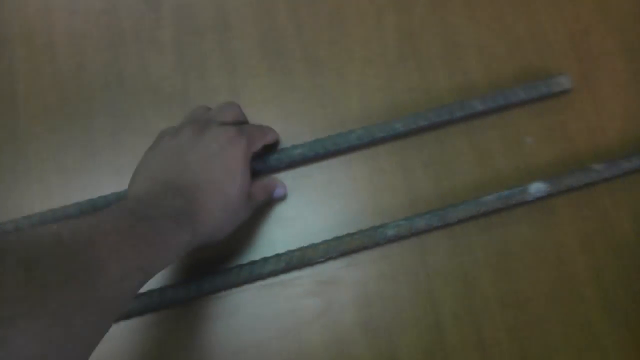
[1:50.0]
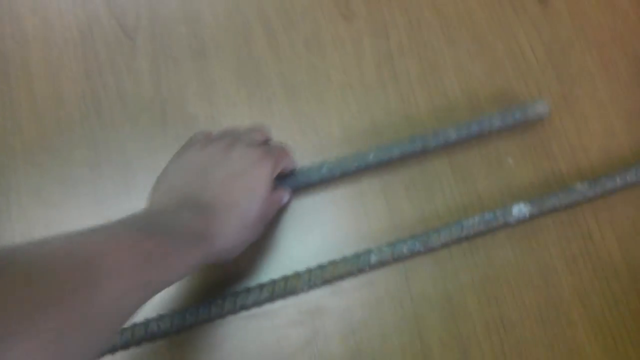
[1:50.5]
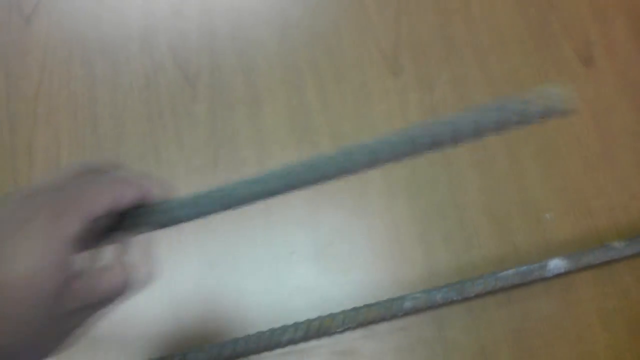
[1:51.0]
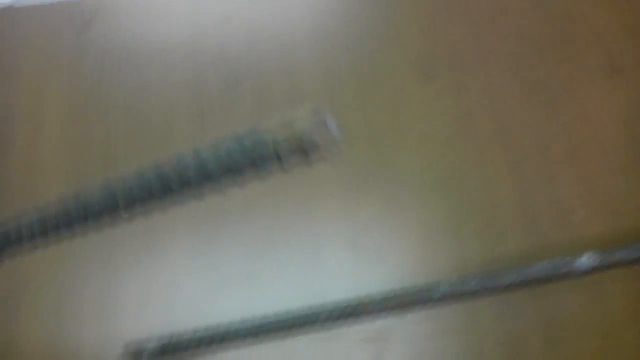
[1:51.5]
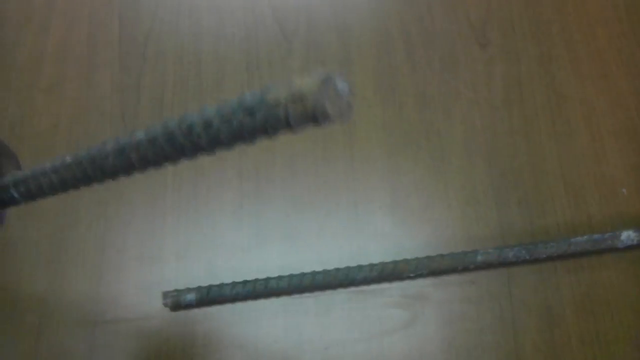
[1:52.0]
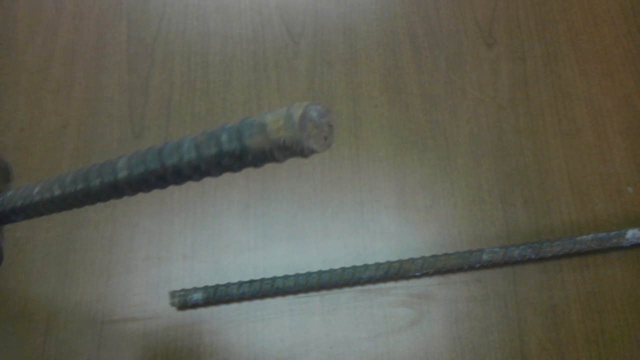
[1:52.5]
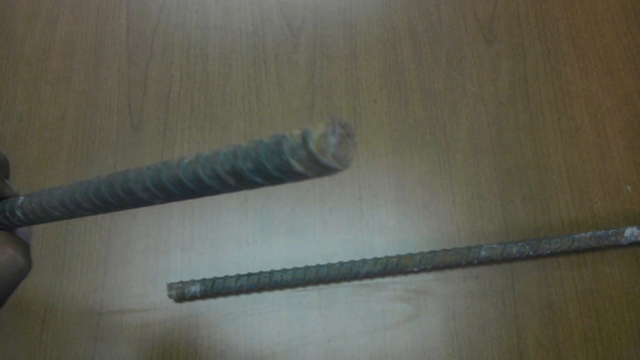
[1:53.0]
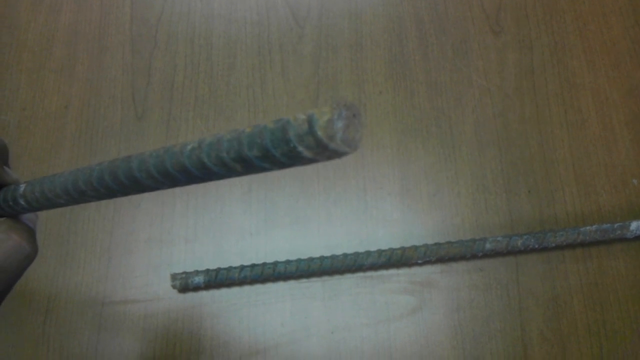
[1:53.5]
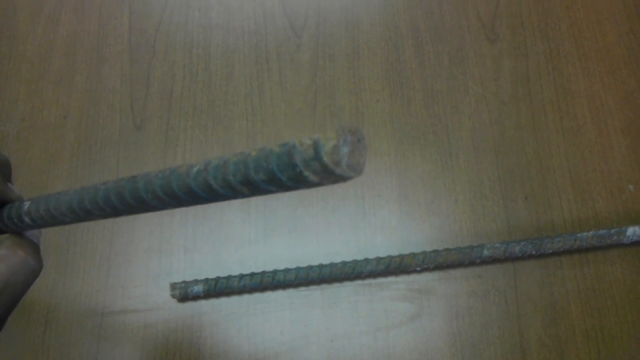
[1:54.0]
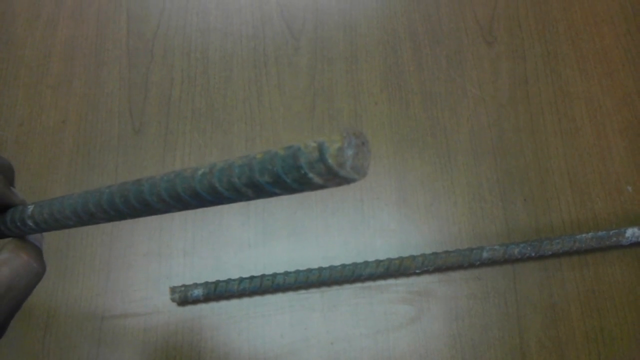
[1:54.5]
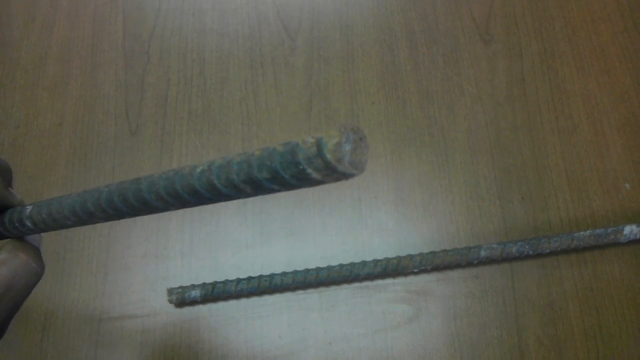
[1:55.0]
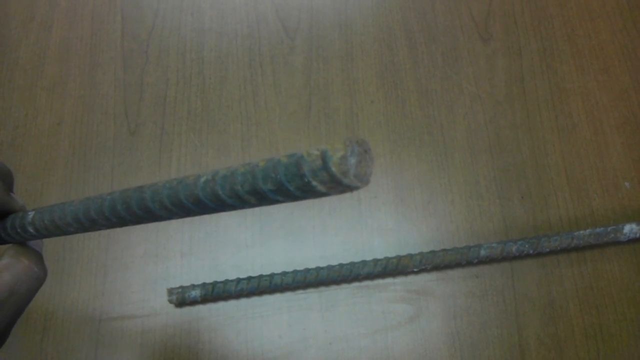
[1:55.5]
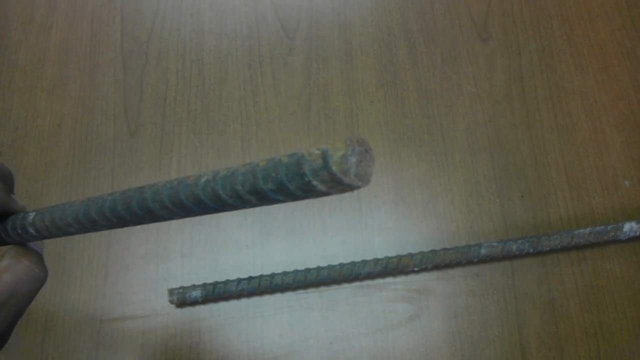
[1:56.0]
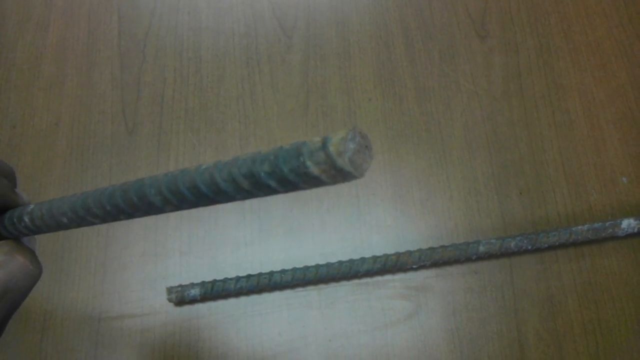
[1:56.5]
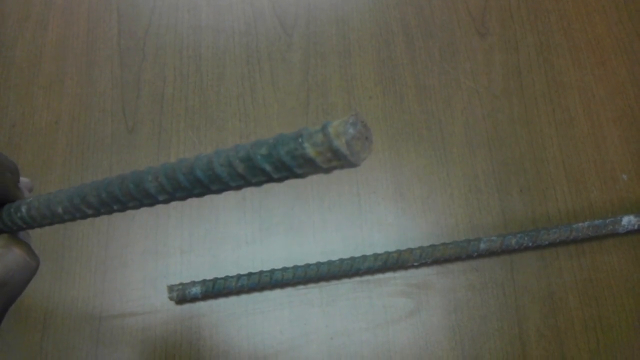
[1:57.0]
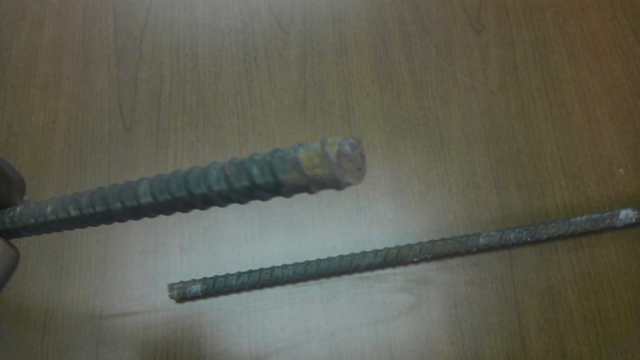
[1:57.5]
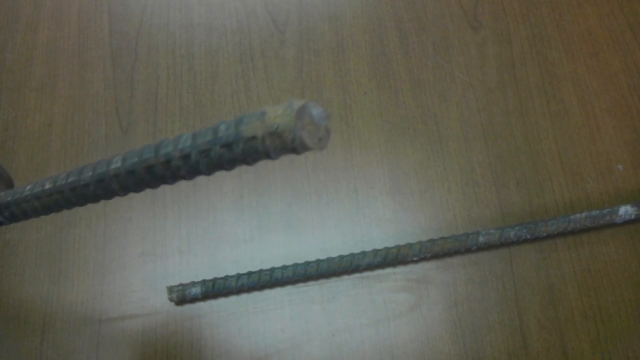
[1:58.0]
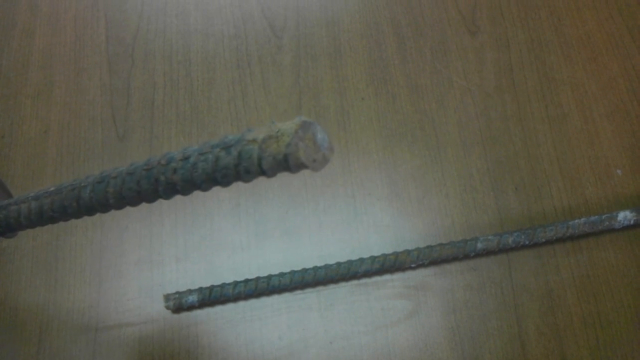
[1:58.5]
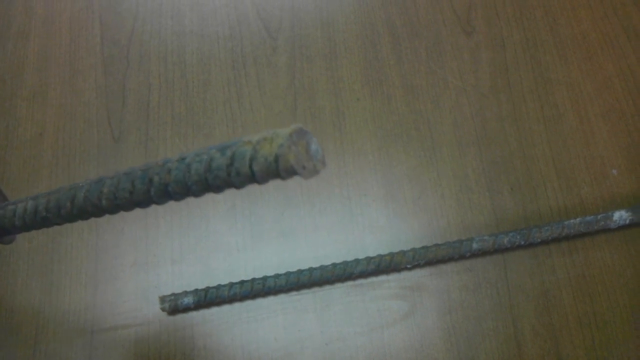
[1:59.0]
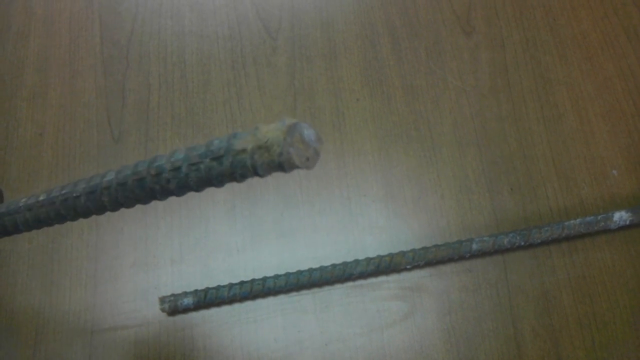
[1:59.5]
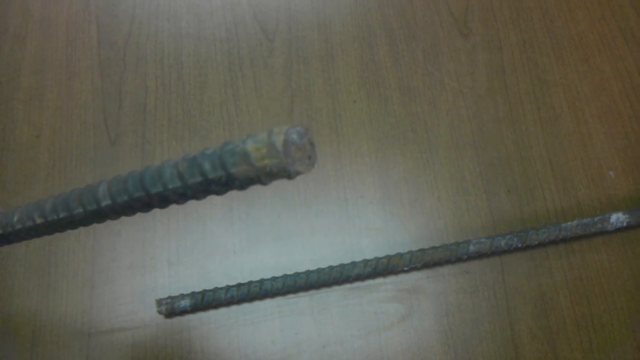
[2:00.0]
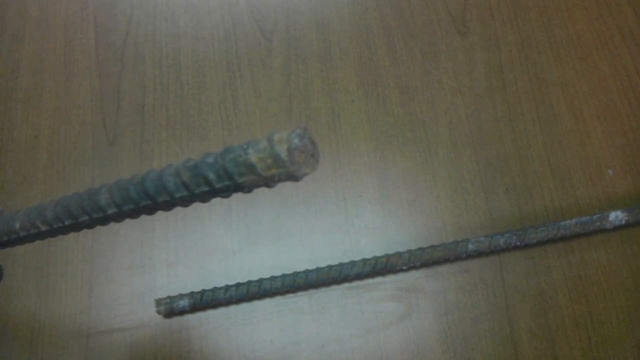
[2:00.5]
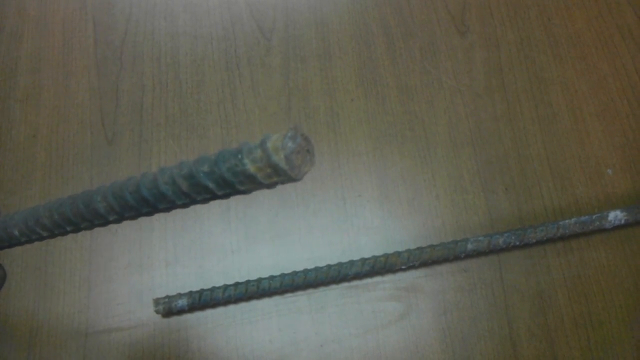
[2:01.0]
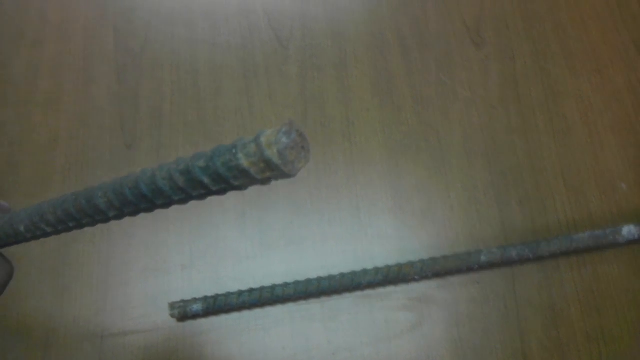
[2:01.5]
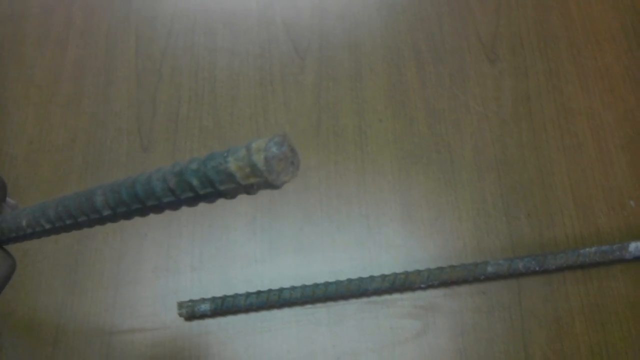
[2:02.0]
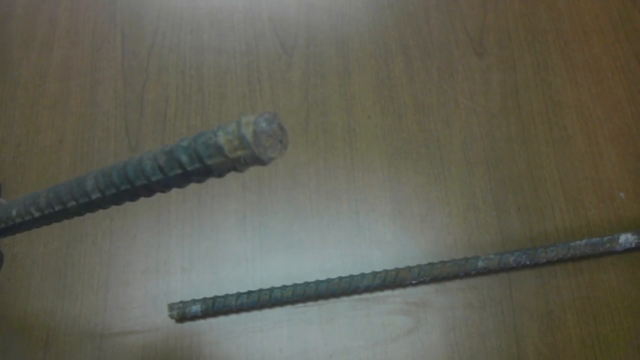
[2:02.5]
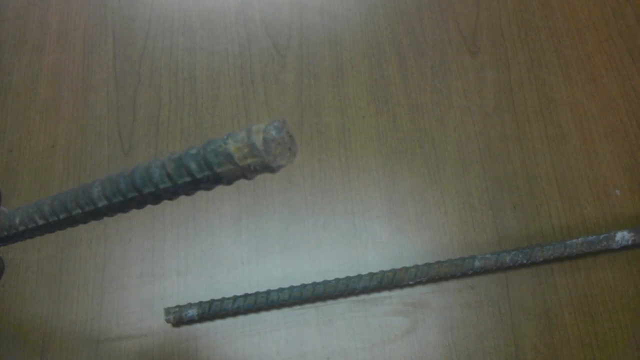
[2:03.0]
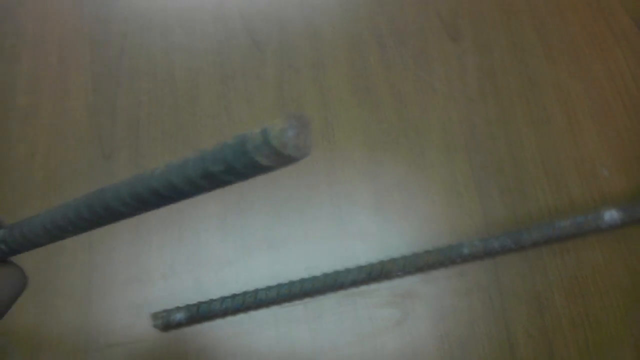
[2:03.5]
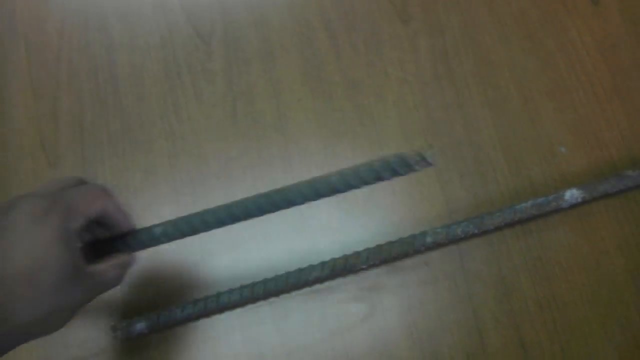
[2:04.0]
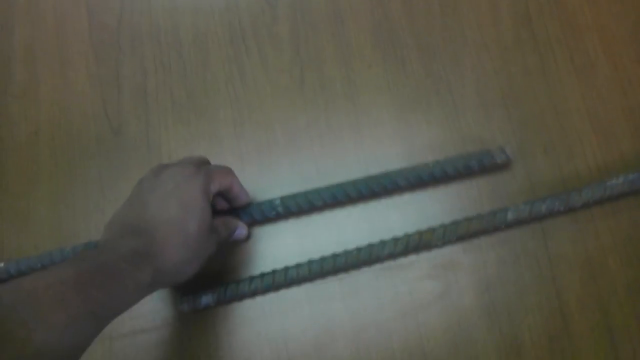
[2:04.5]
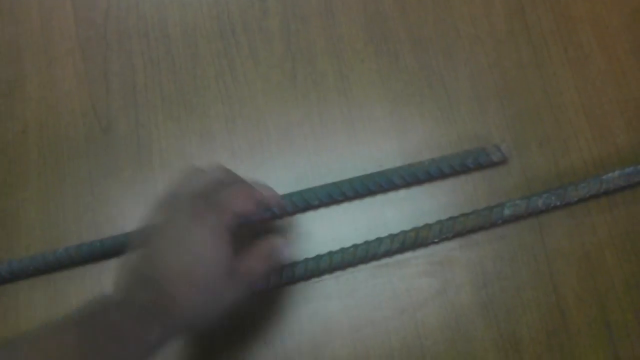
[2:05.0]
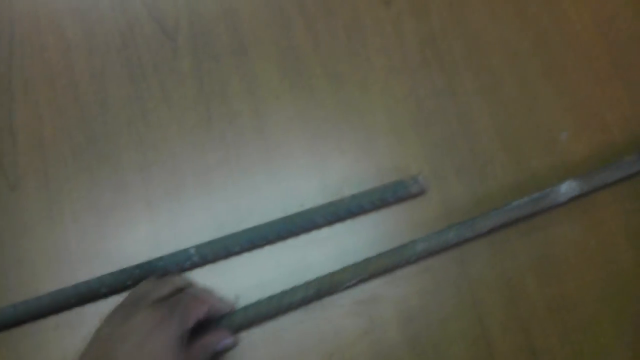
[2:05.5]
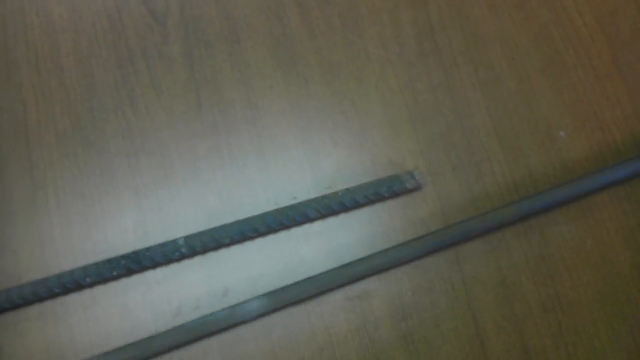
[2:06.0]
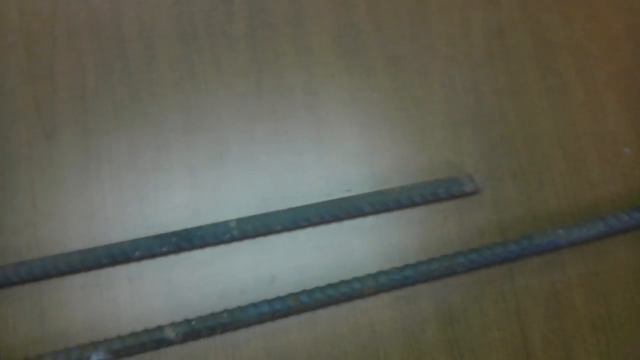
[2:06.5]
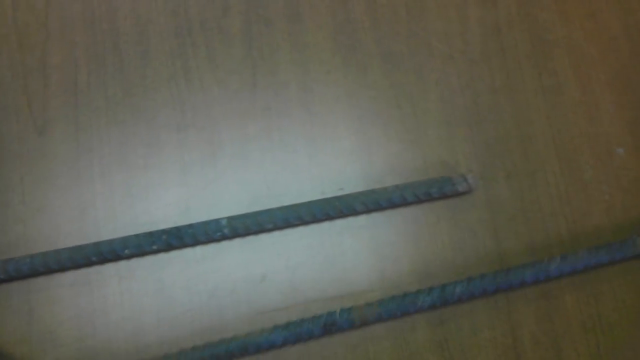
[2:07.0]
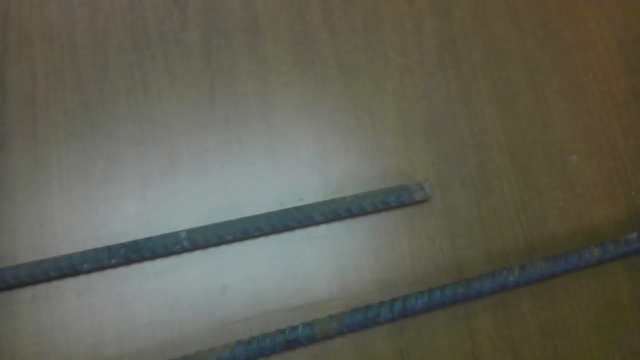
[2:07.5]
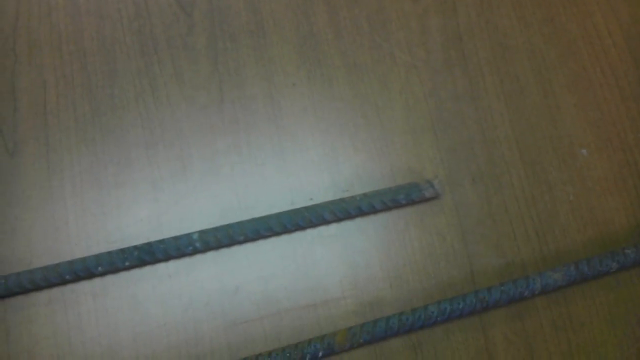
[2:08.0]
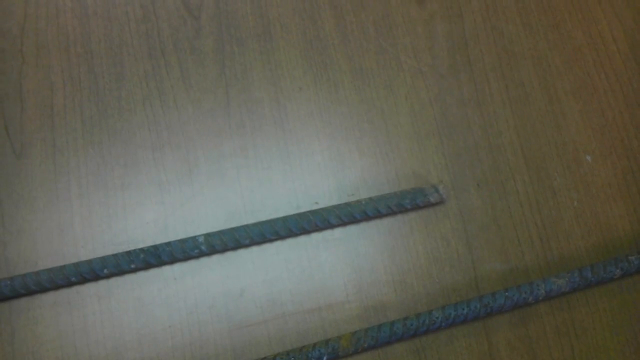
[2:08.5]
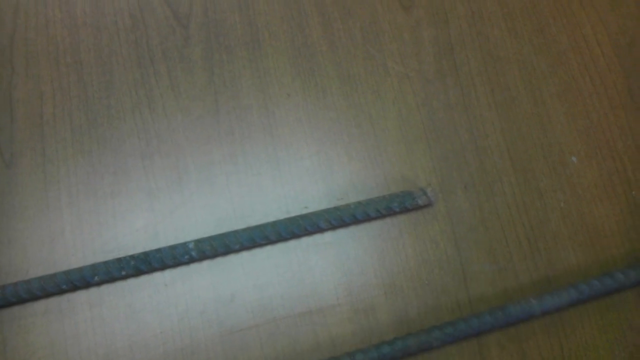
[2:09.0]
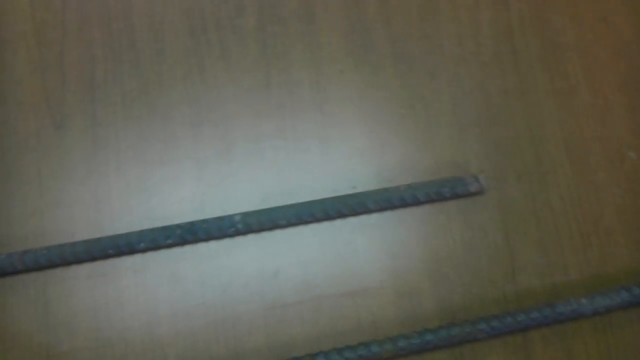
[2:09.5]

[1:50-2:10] Two pieces of rebar are on a table, seen from above through what is presumably a cell phone camera, which shakes a little. One piece comes from the left side of the screen and one from the right, meeting on the table in the center of the frame with some distance between them. There is a glare on the table from an overhead light. A hand reaches in from the left-hand side of the frame, grasps the upper piece of rebar, holds it up to the camera, and slowly rotates it to show the end edge of the bar and its spiral segmenting. Some rust and discoloration are visible on this bar. He rolls it back and forth in front of the camera a few times, puts it down on the table, then grabs the other piece of rebar and starts pulling it toward the camera from the right to the left.